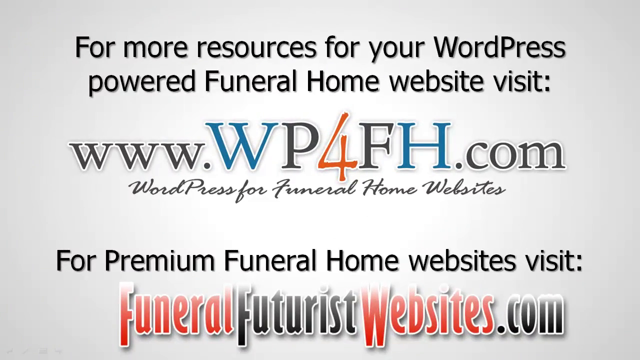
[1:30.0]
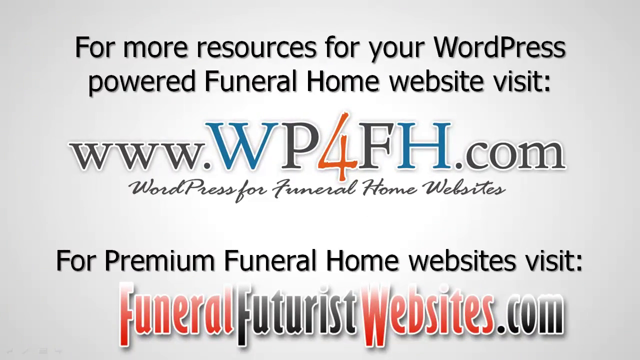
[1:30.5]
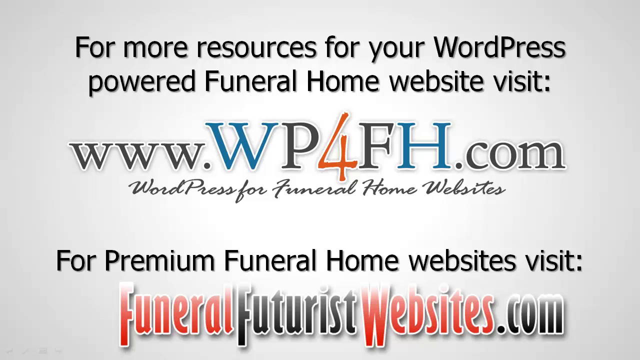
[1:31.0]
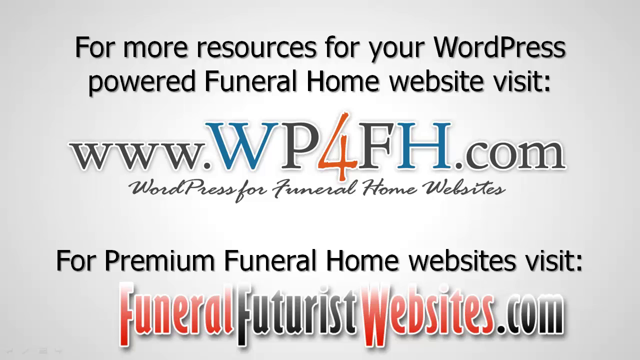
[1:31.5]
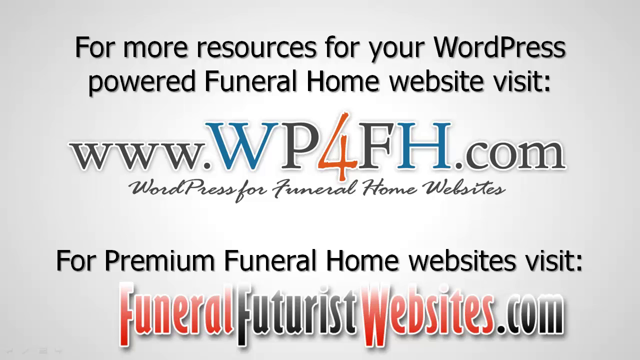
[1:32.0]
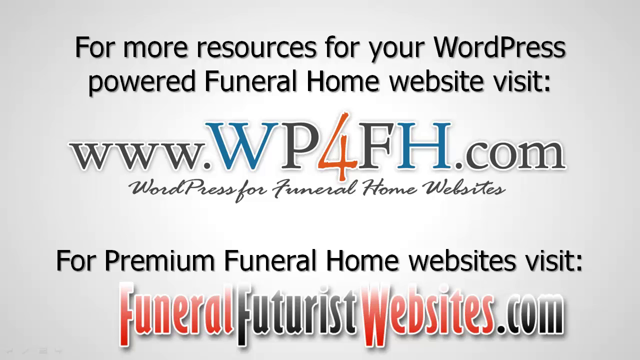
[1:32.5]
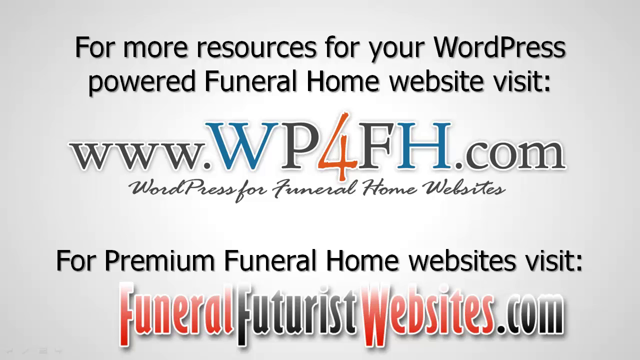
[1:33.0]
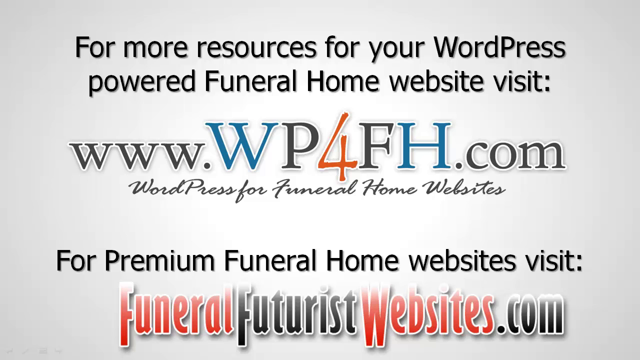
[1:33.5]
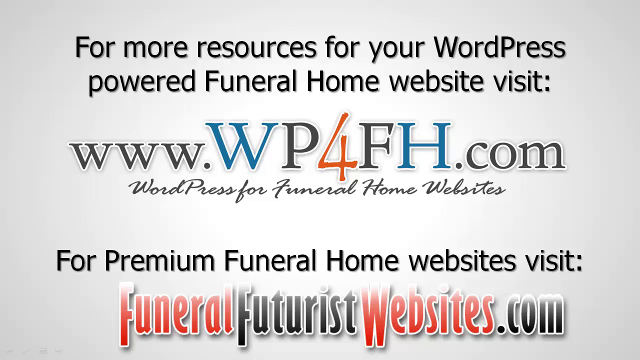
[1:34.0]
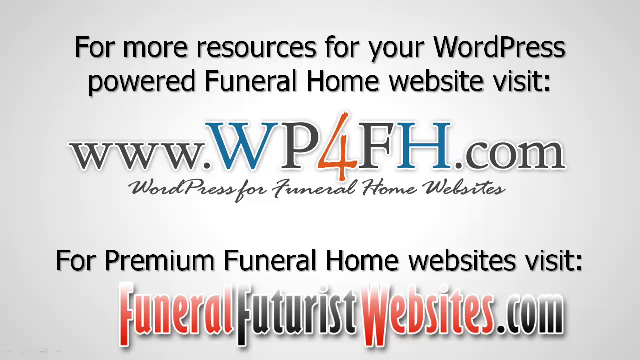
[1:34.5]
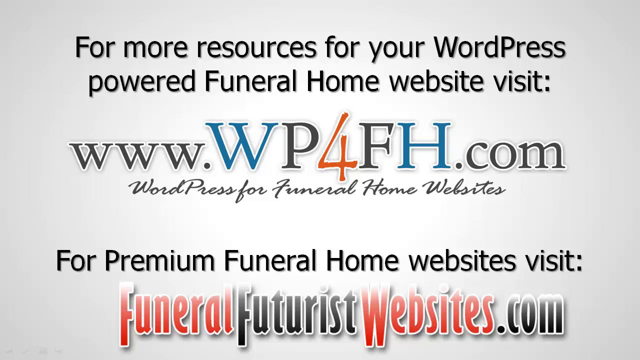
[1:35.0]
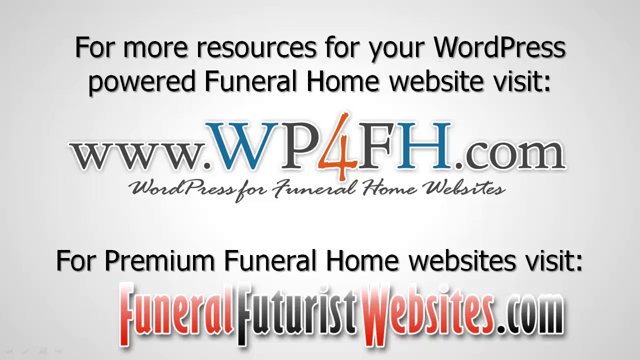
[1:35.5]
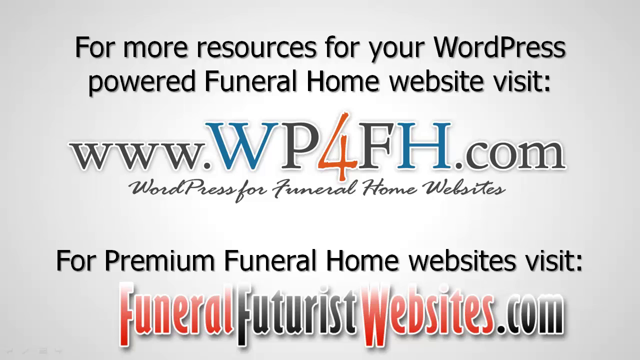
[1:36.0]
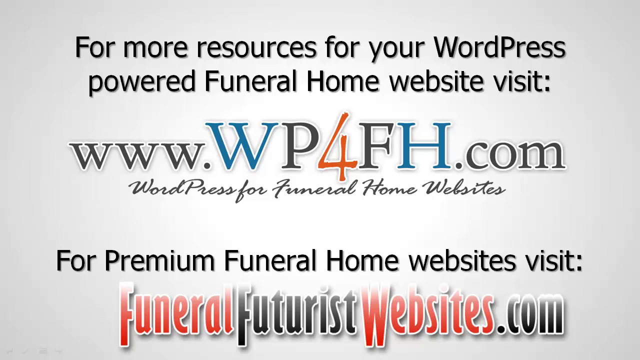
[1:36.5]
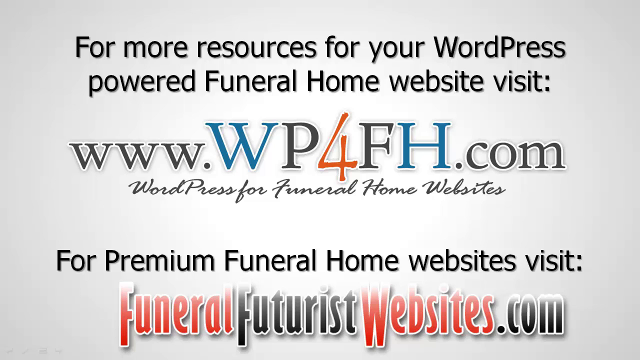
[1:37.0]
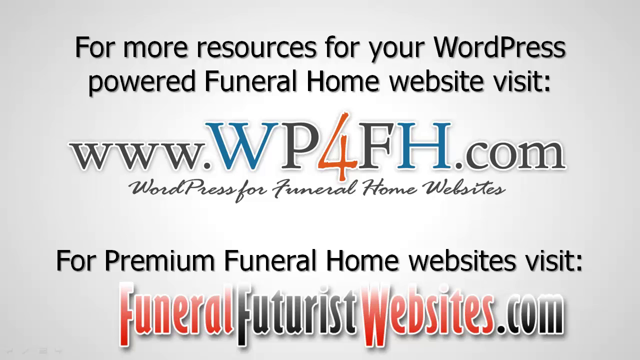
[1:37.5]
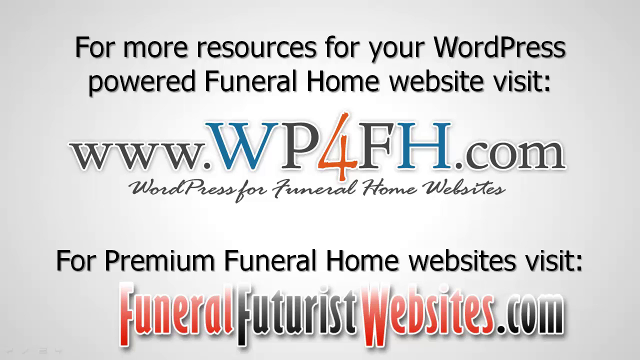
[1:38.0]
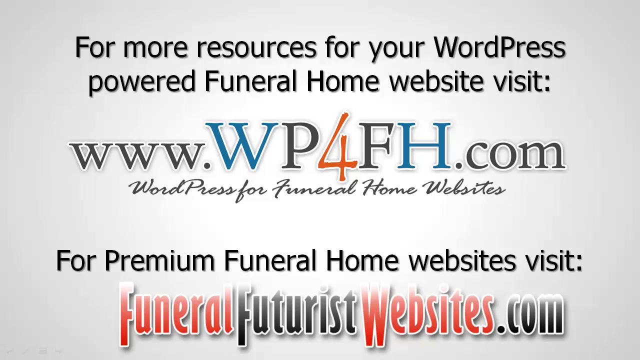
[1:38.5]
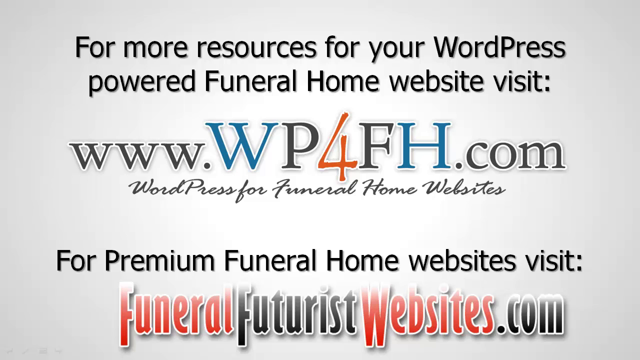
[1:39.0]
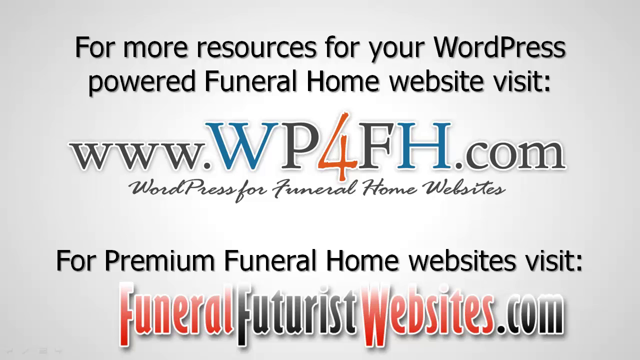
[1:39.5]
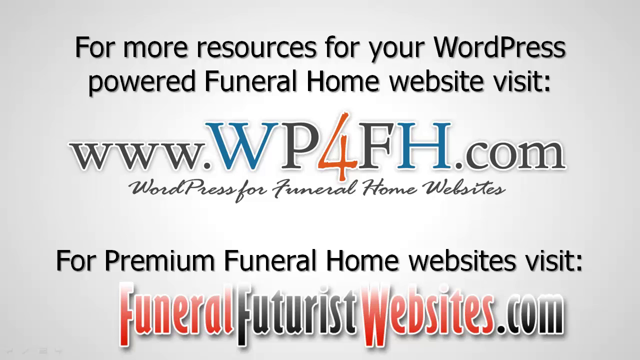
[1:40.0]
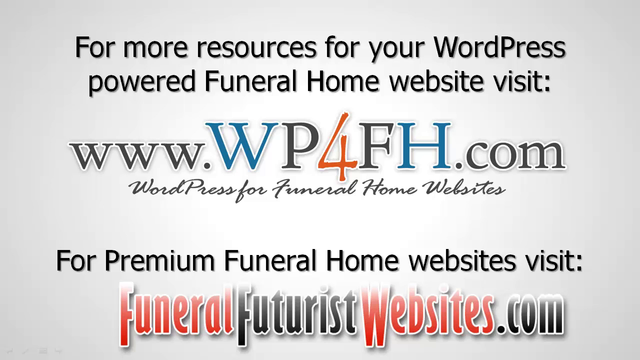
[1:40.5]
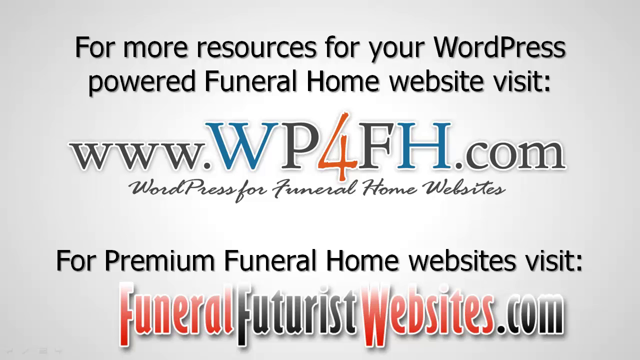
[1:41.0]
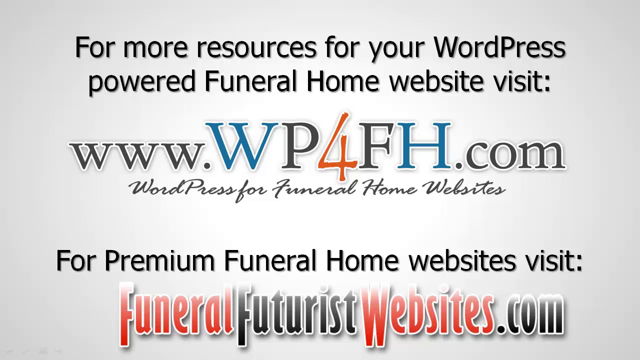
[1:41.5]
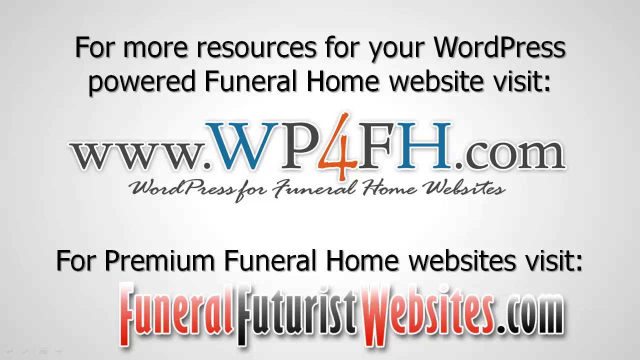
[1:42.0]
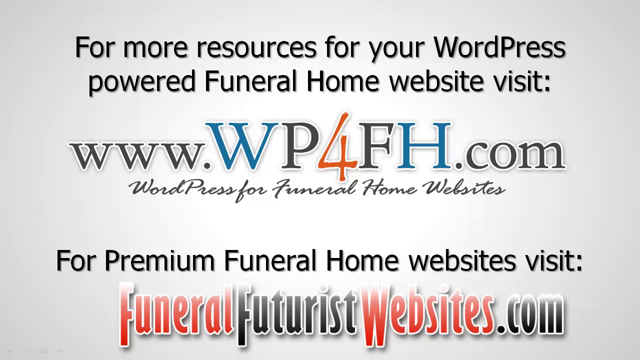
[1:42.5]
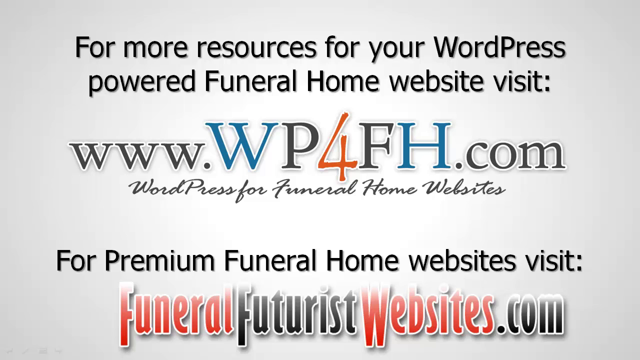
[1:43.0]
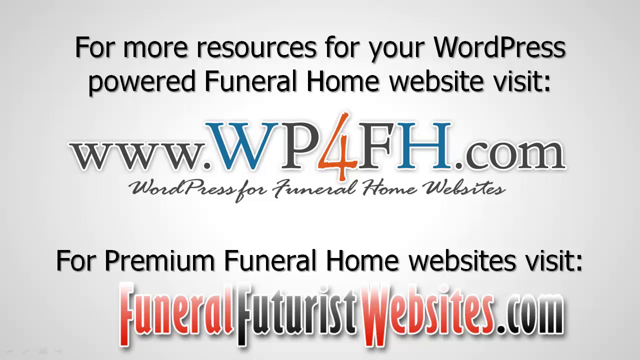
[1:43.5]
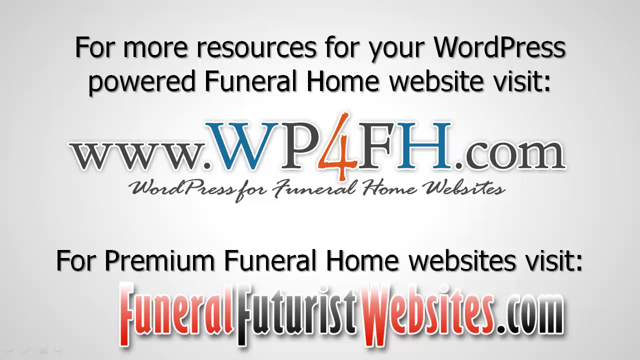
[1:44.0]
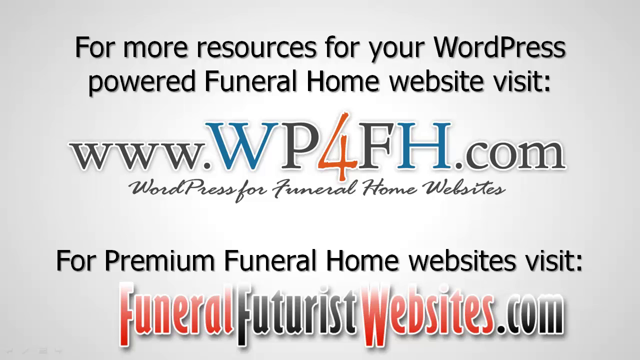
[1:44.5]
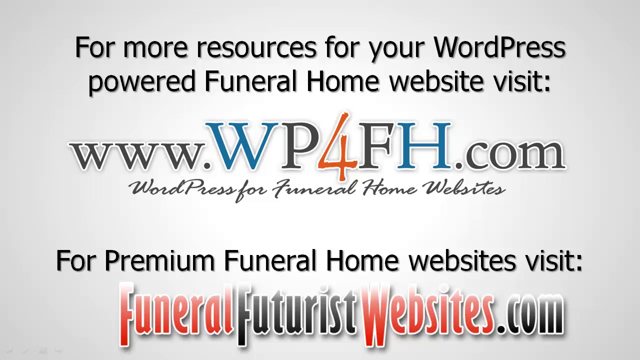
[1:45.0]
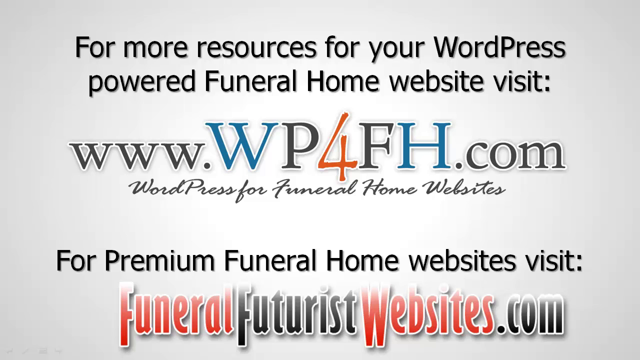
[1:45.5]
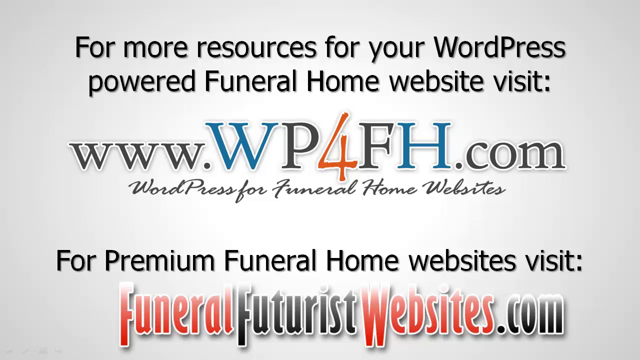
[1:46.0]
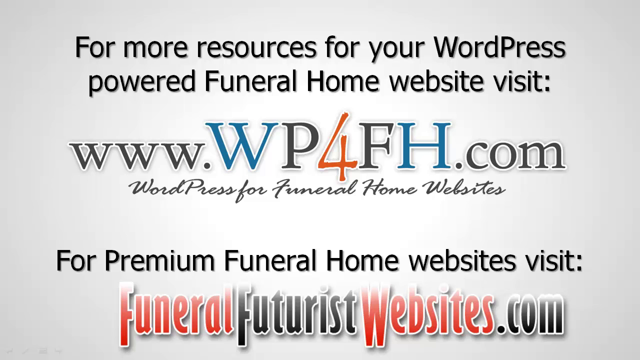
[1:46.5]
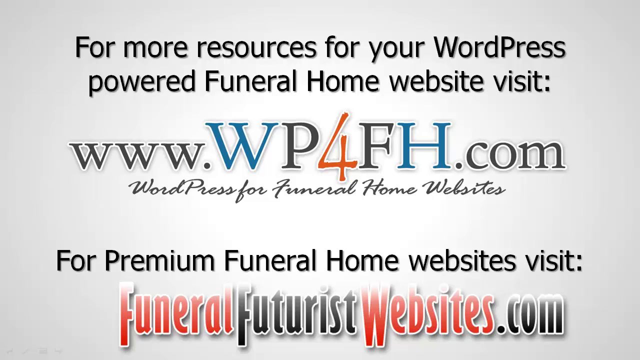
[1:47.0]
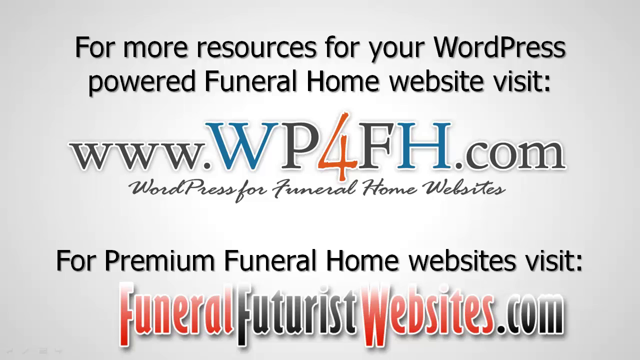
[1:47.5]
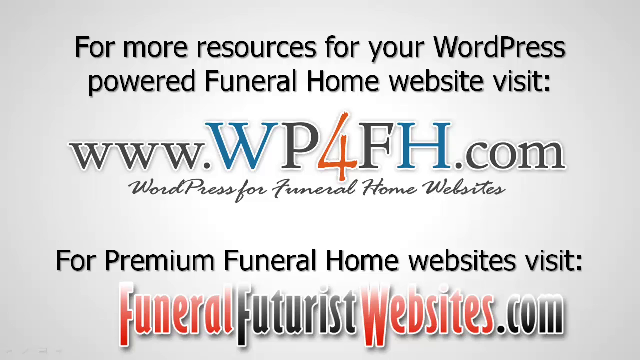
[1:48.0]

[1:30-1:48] The WordPress-powered funeral home website is presented as the place to edit and customize images and compose information about the deceased for an obituary. FuneralFuturist.com is mentioned for premium funeral home websites, offering extras such as adding more than two images to one obituary.